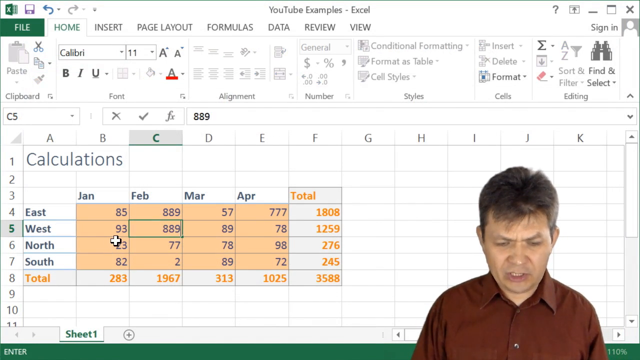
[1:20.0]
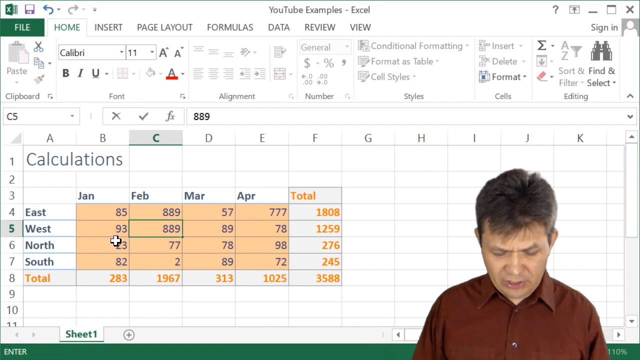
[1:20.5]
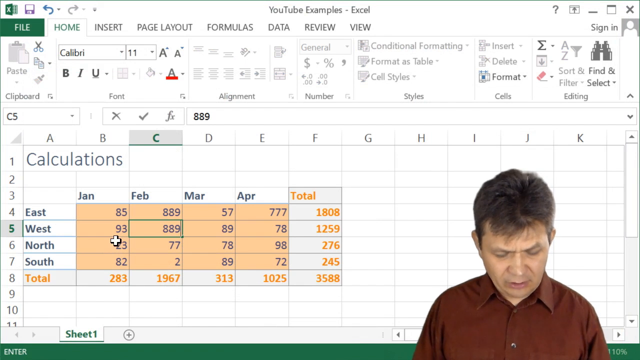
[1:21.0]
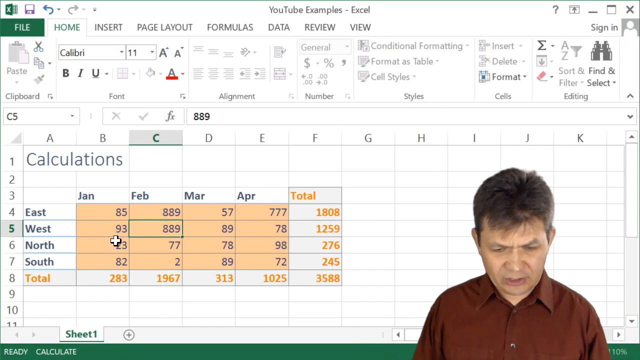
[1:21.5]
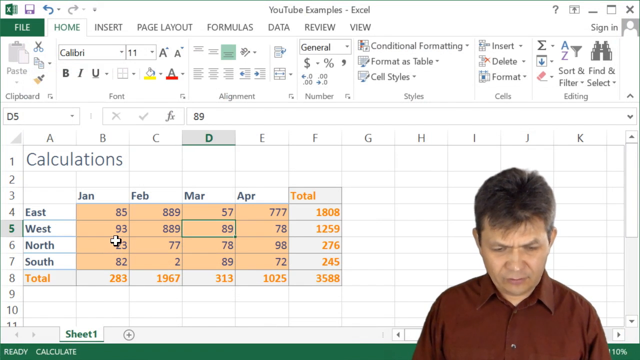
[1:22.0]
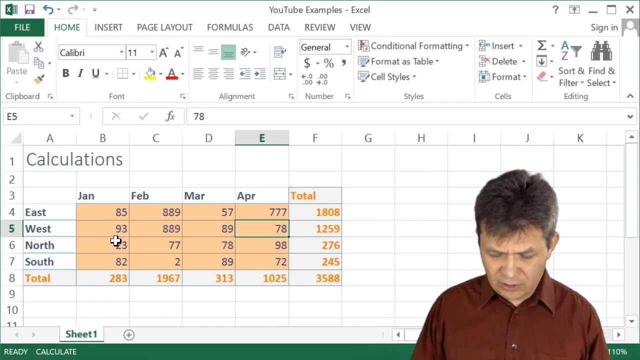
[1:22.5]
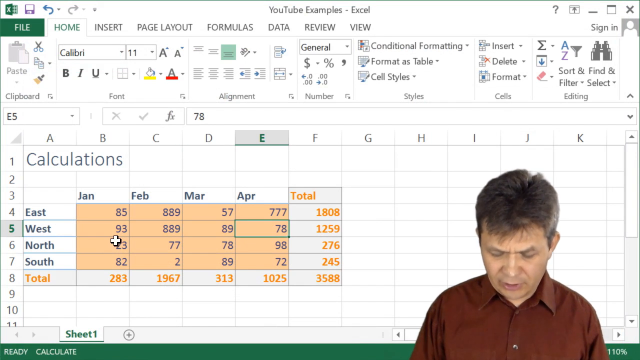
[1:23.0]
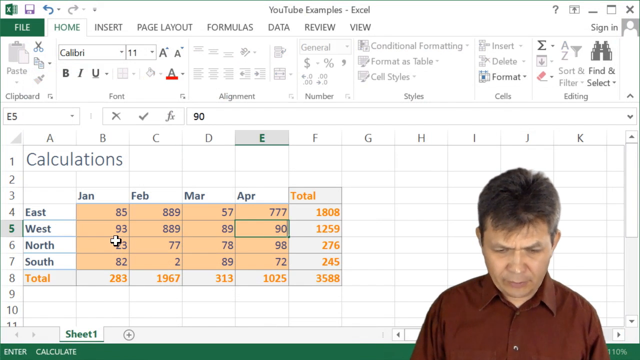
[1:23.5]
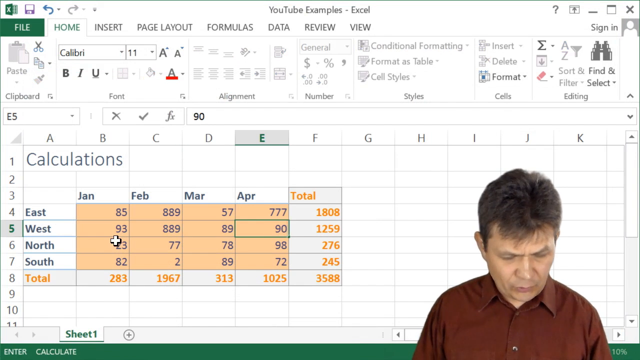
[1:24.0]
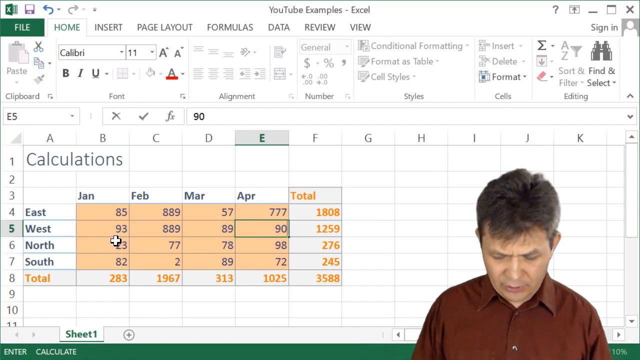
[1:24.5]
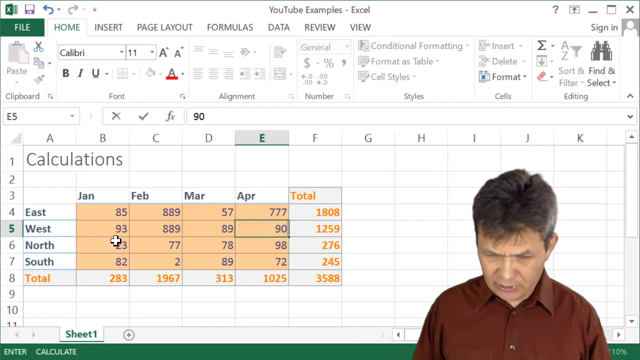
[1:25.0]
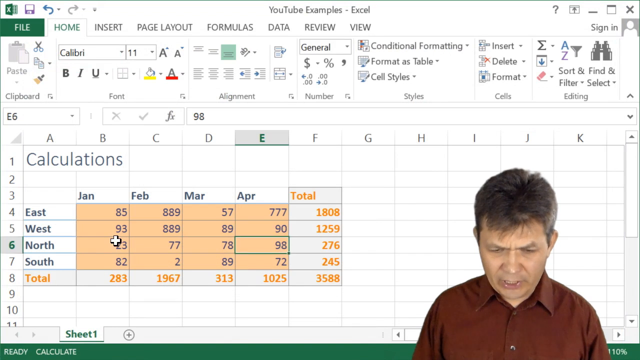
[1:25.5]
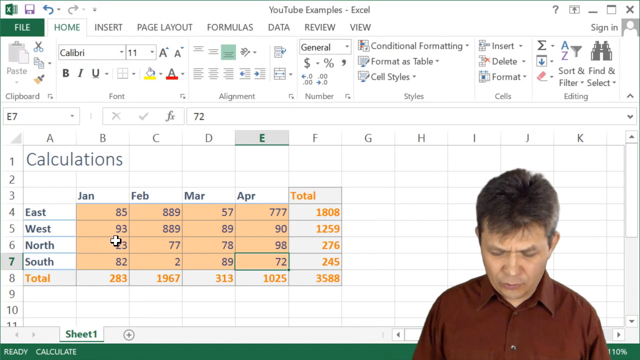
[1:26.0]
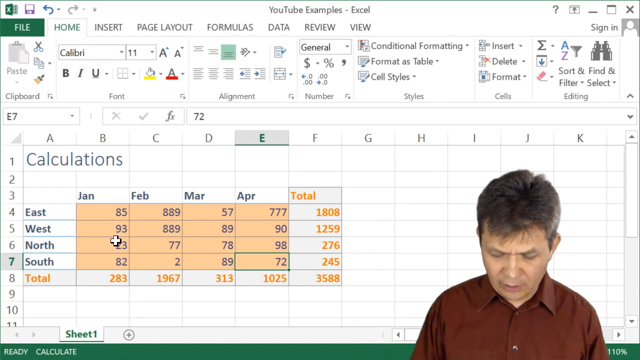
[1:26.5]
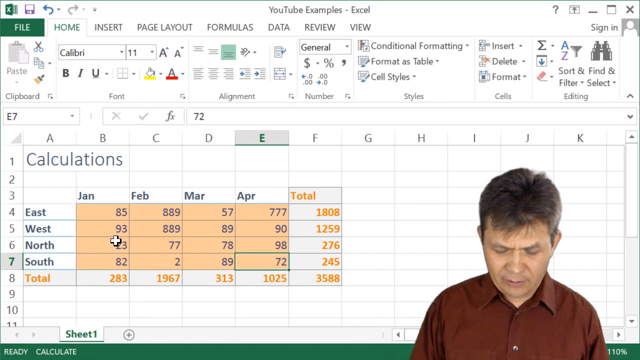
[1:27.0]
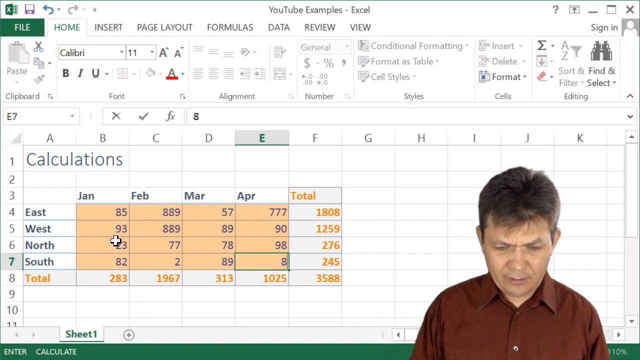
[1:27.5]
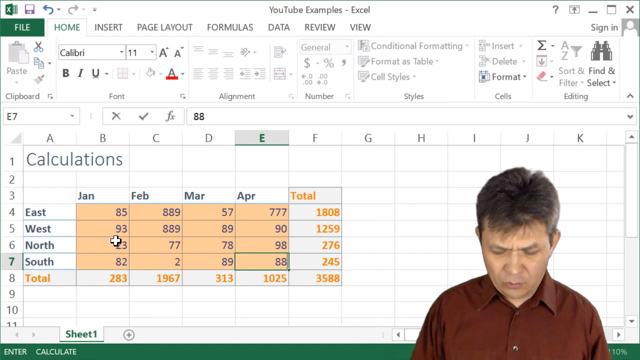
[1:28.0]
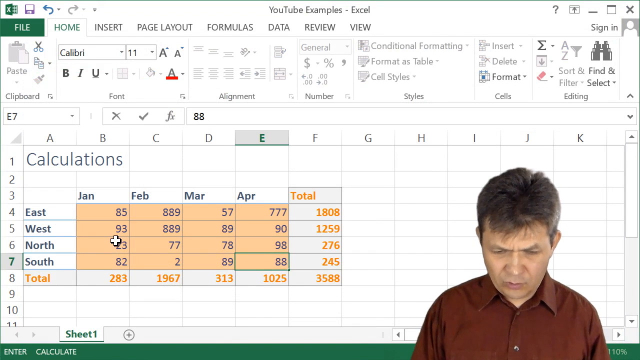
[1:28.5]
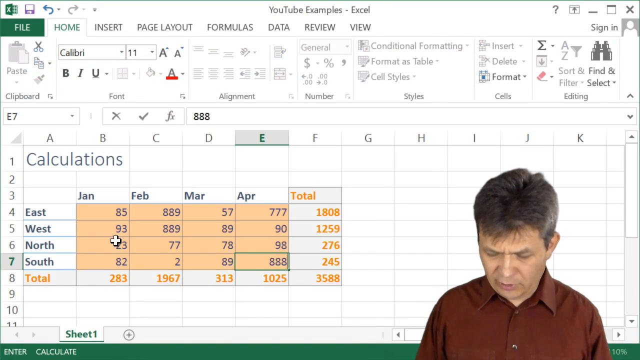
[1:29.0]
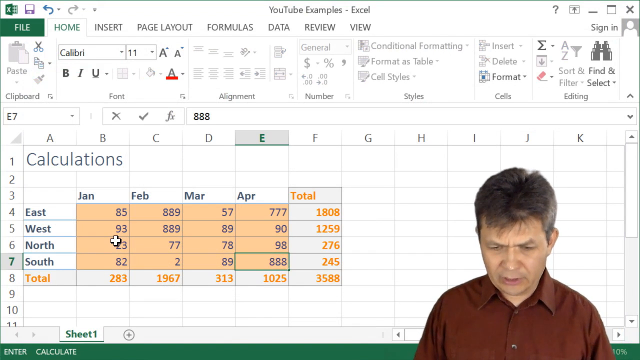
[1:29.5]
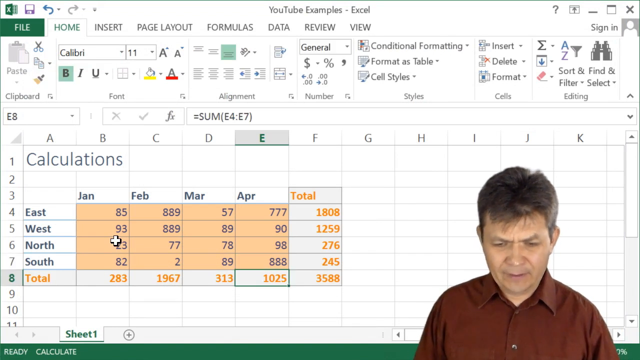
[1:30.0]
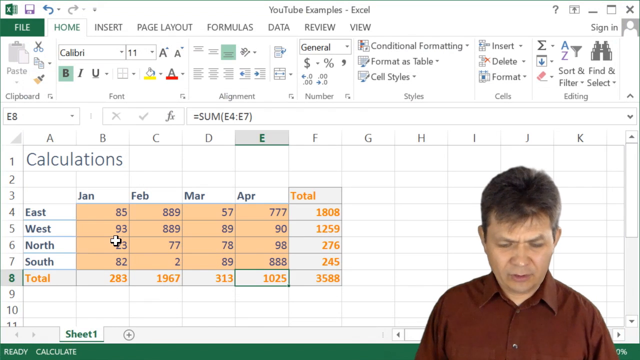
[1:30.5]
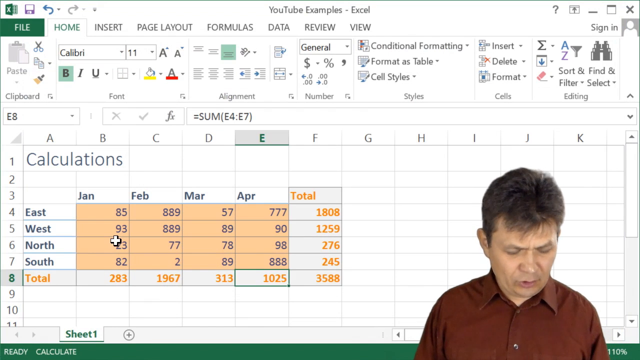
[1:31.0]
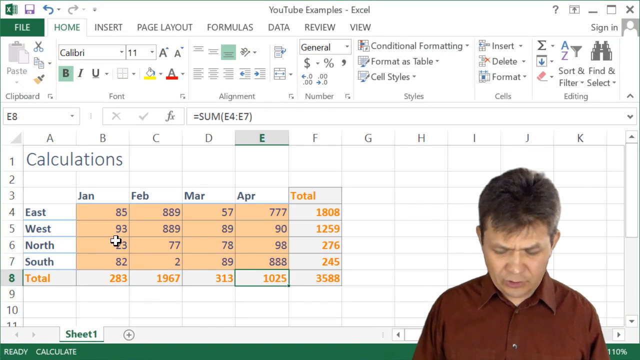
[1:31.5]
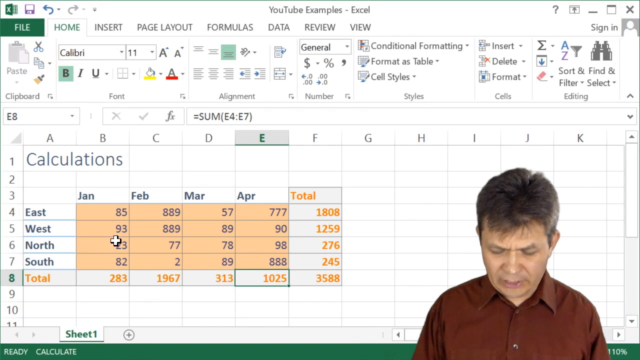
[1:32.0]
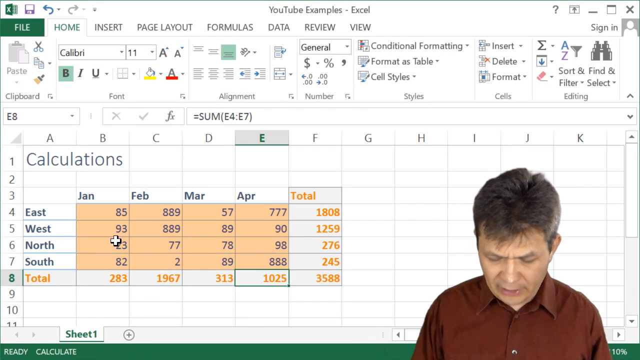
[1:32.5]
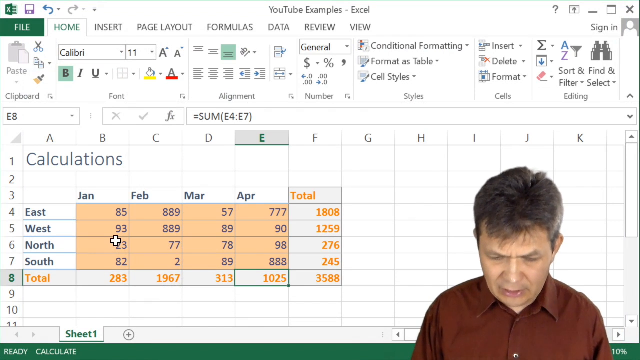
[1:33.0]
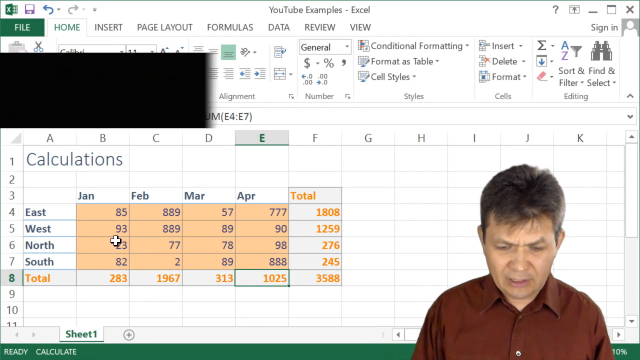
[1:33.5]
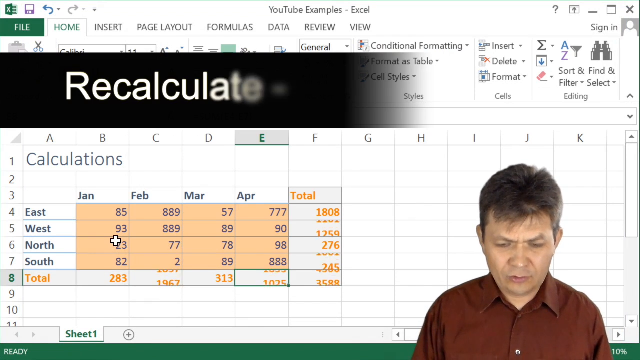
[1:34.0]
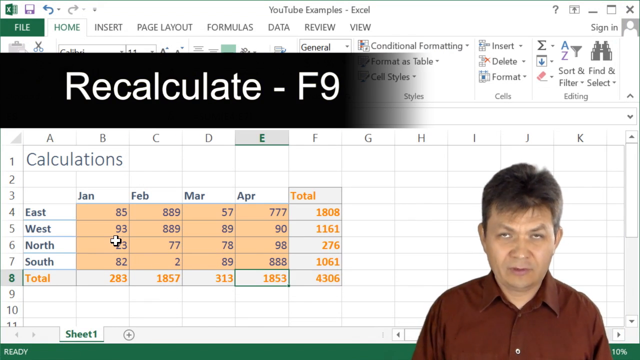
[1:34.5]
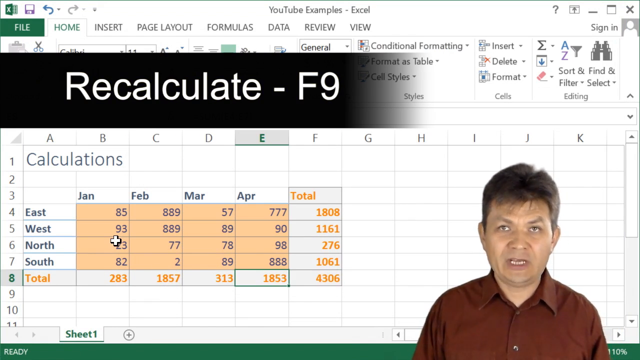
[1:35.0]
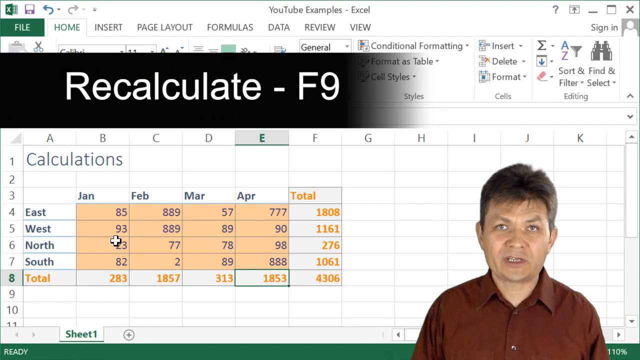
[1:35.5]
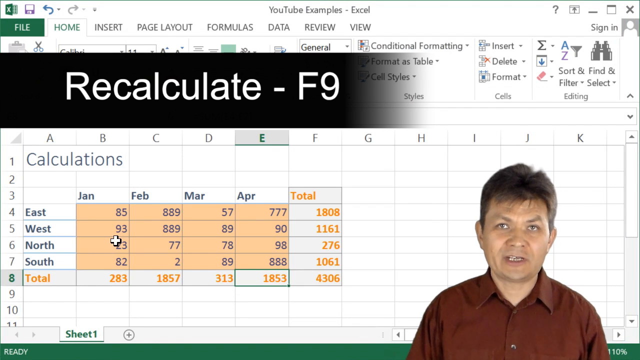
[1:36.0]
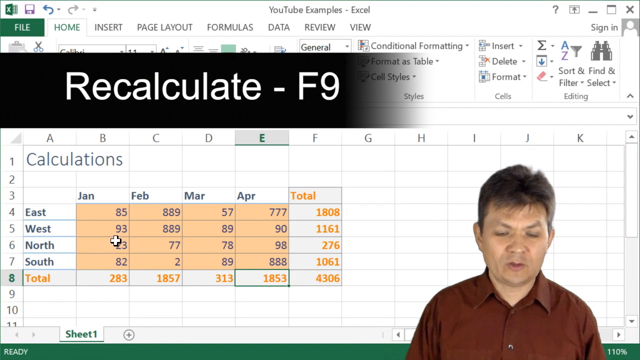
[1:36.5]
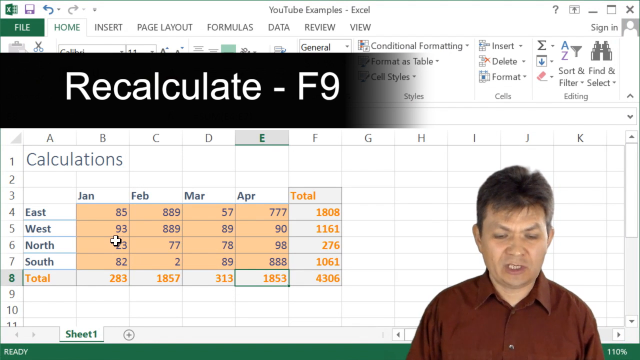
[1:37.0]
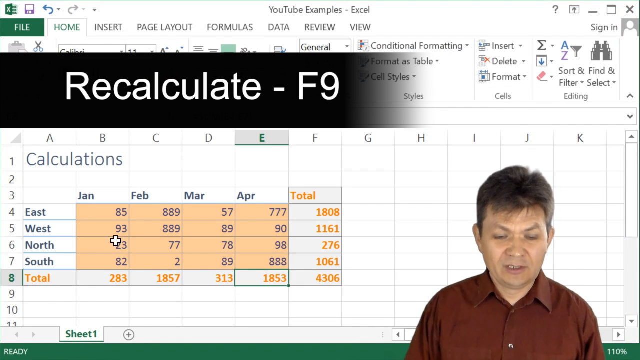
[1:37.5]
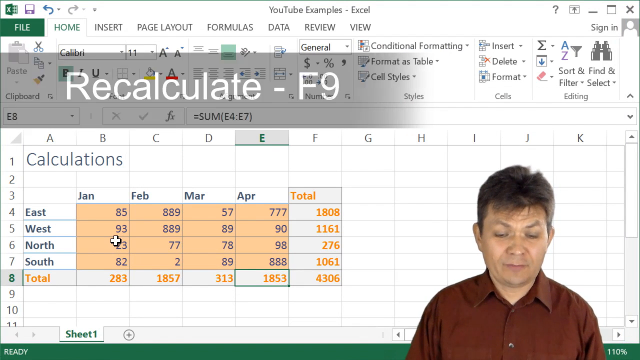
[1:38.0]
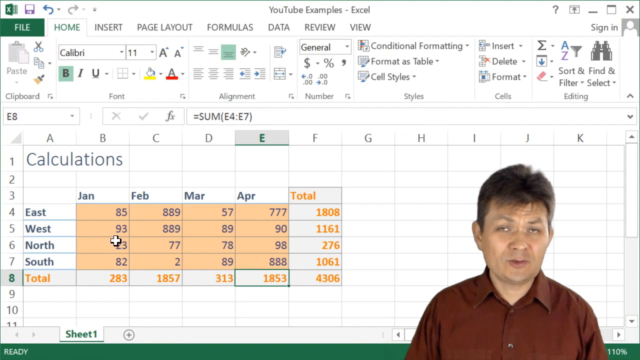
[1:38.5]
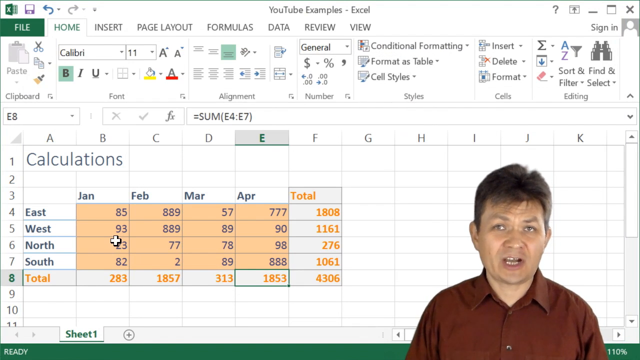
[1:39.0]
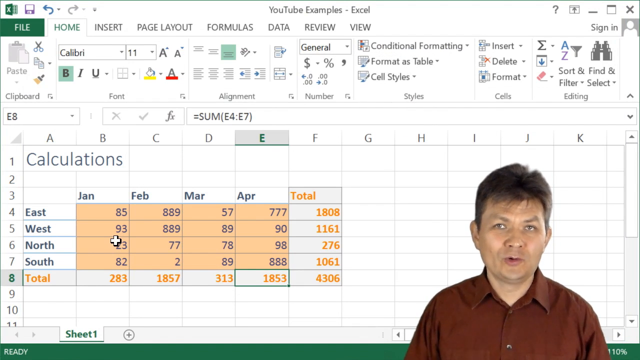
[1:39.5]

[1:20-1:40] With manual calculation, recalculating the entered data in Microsoft Excel is done with F9.